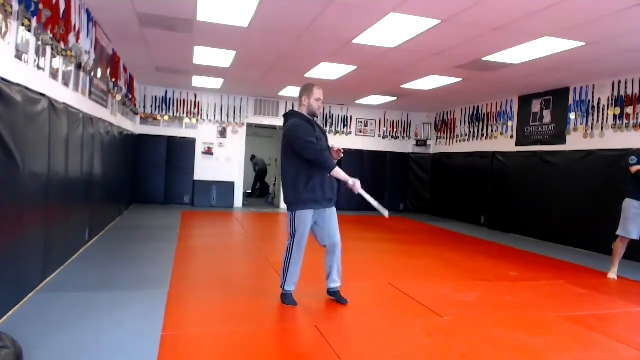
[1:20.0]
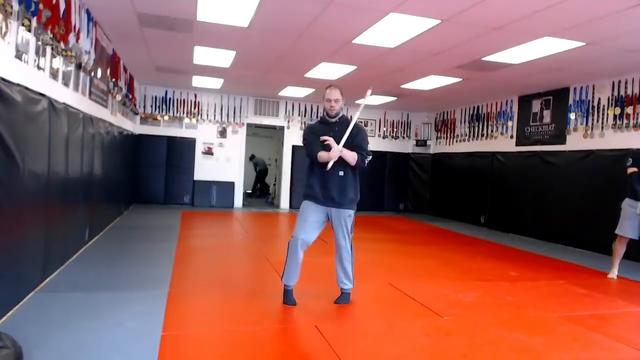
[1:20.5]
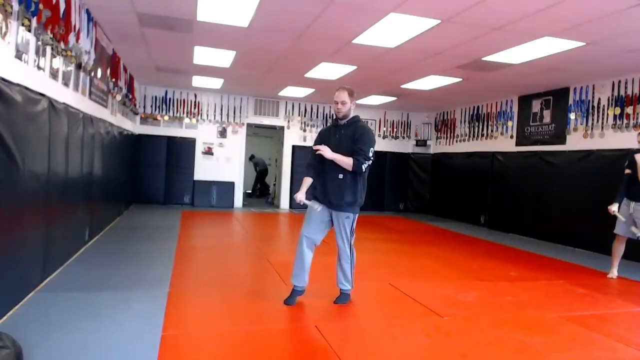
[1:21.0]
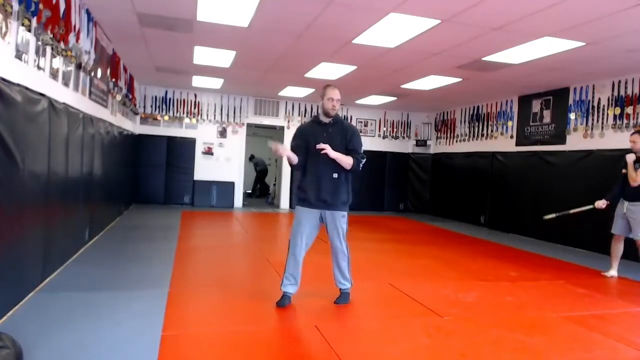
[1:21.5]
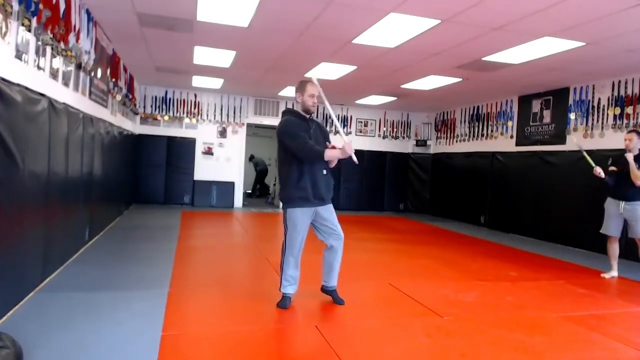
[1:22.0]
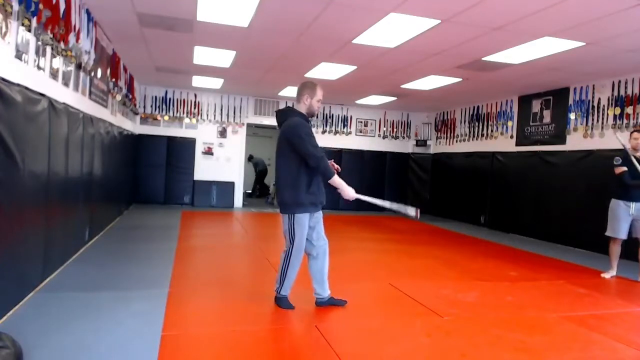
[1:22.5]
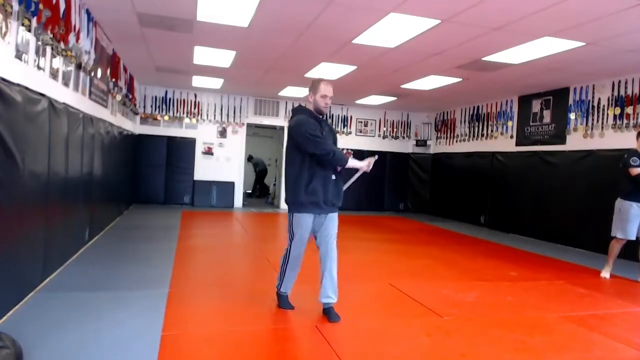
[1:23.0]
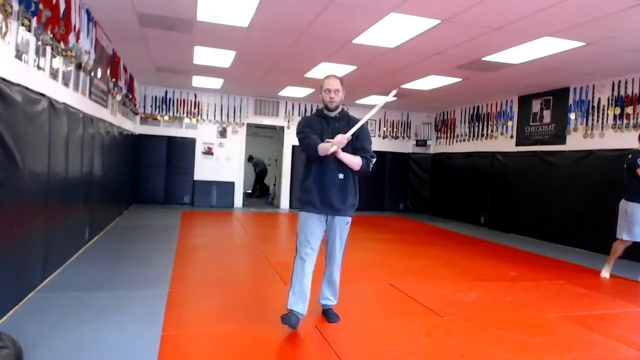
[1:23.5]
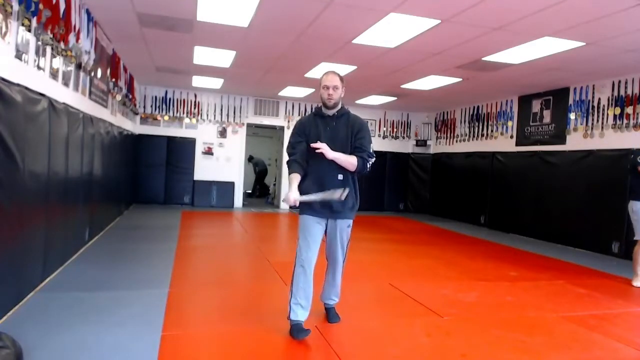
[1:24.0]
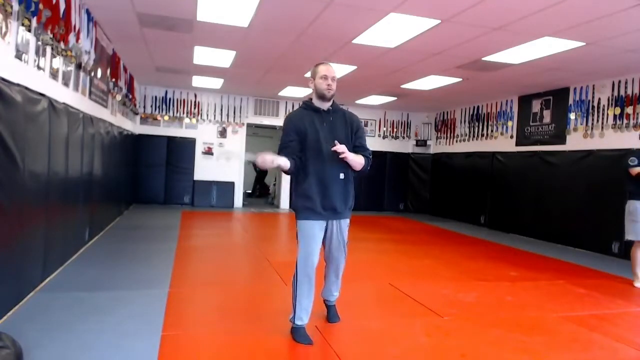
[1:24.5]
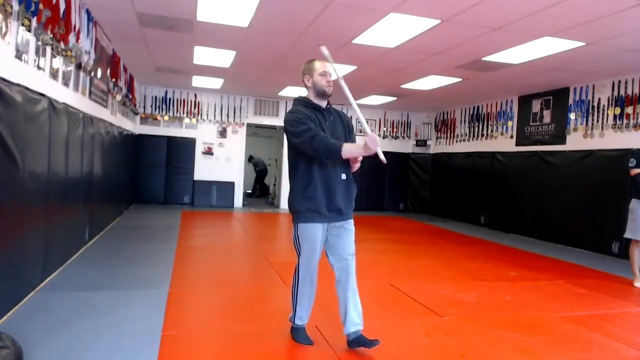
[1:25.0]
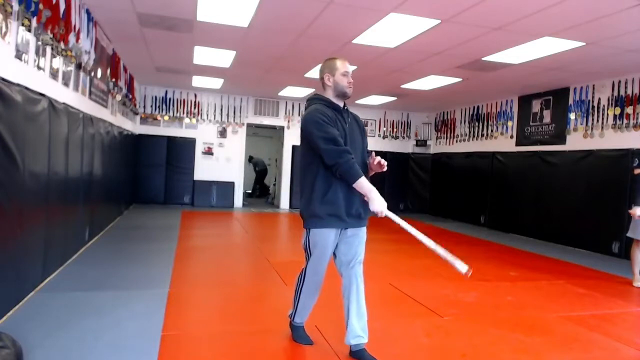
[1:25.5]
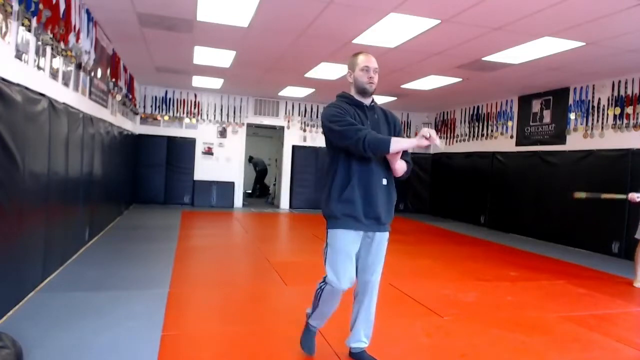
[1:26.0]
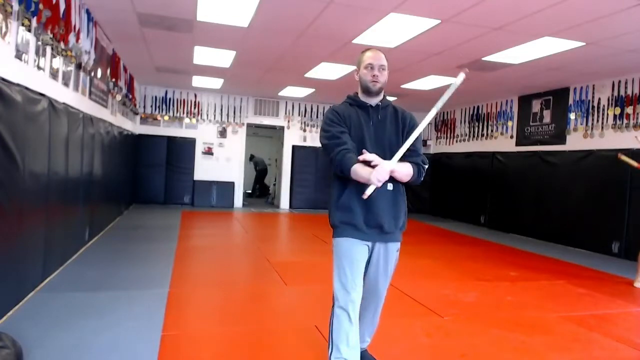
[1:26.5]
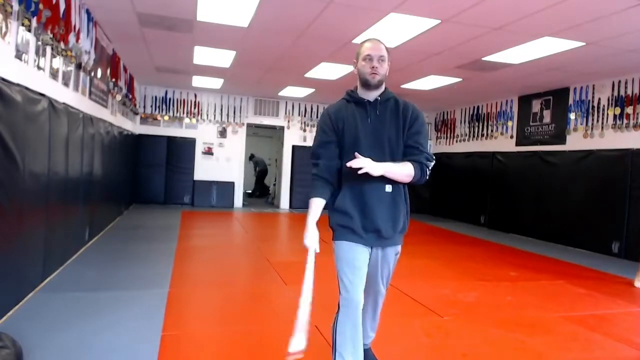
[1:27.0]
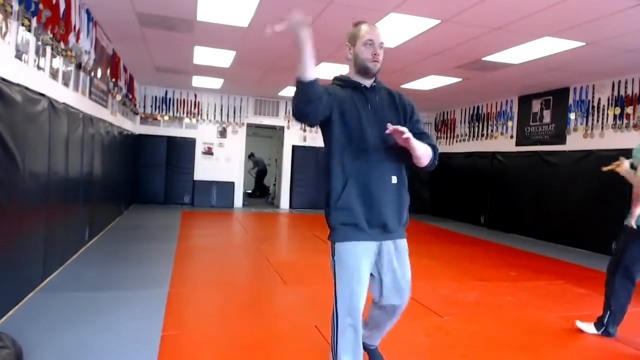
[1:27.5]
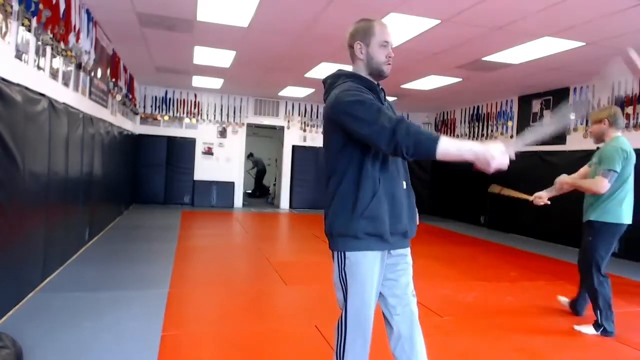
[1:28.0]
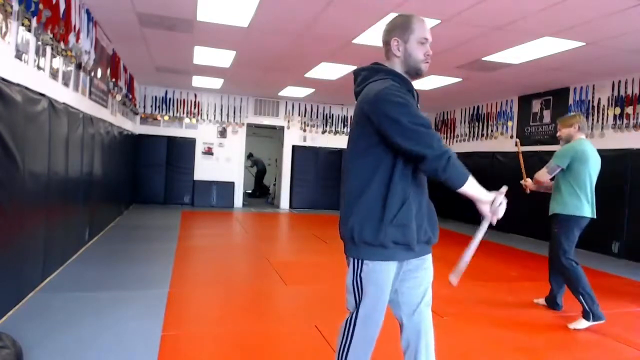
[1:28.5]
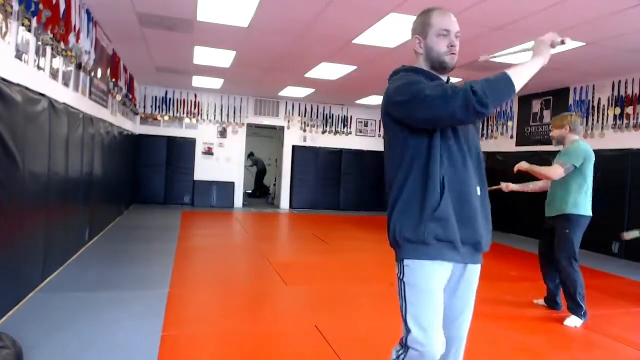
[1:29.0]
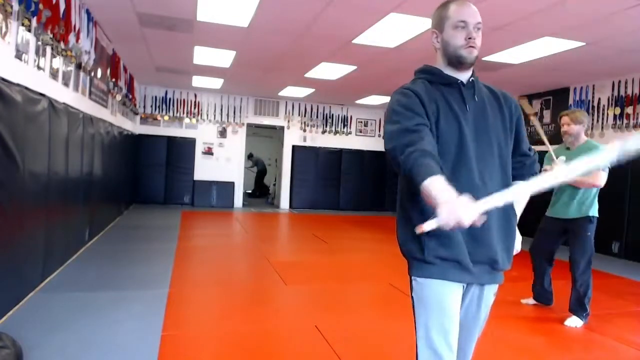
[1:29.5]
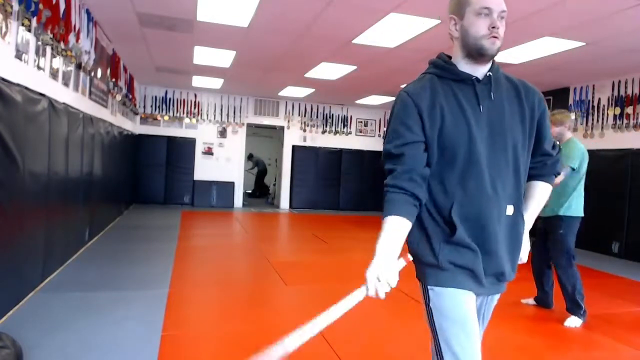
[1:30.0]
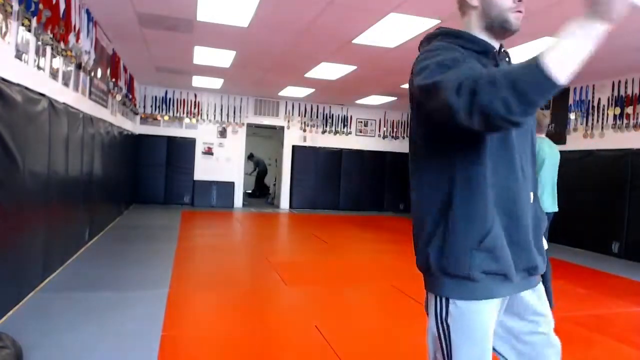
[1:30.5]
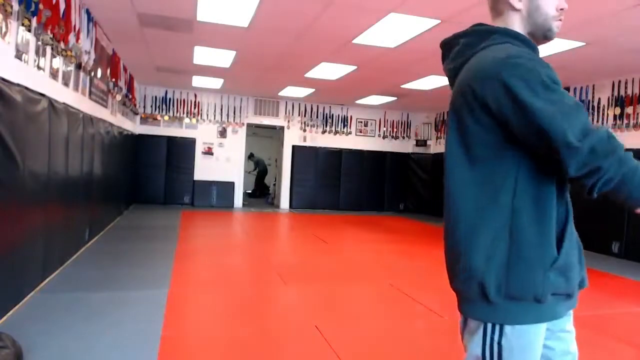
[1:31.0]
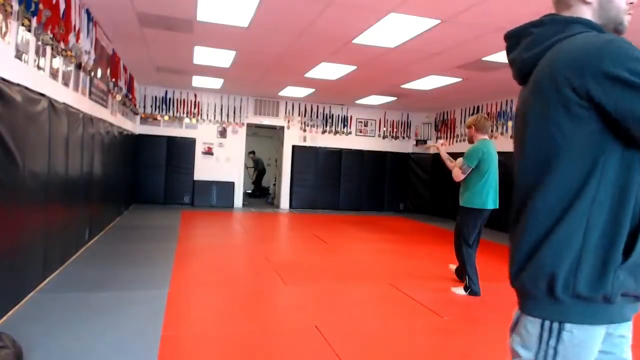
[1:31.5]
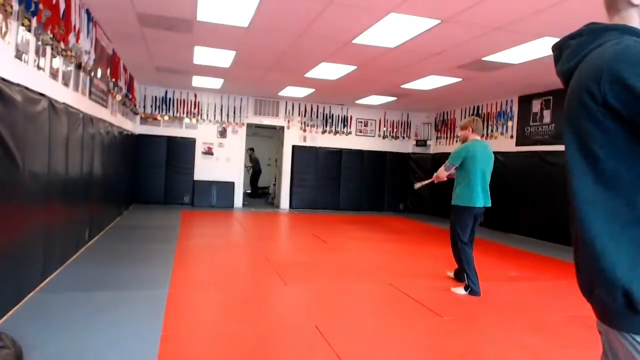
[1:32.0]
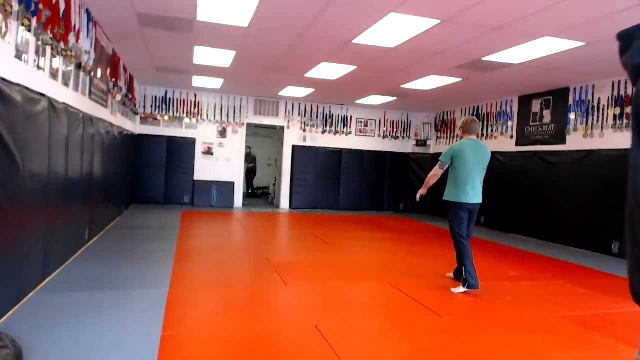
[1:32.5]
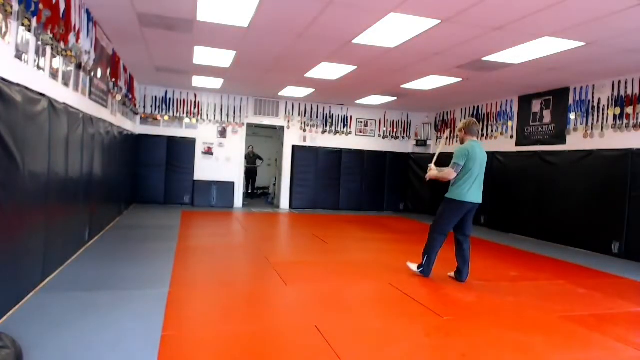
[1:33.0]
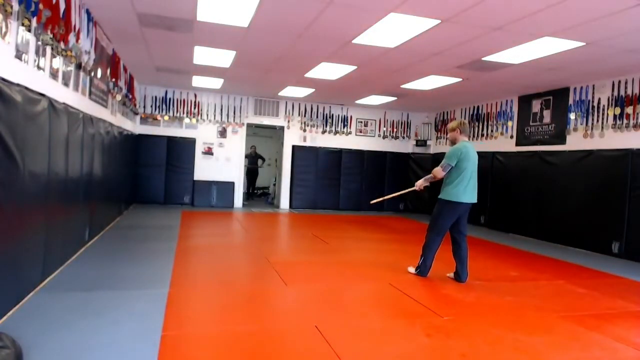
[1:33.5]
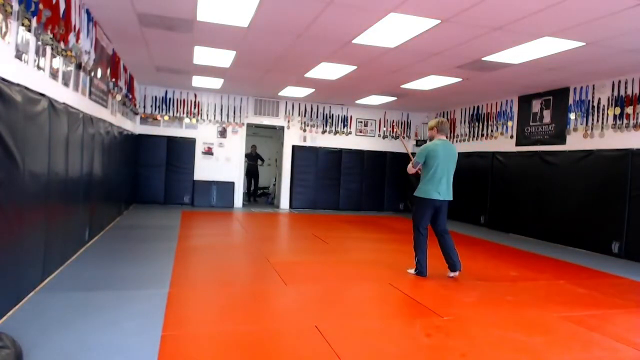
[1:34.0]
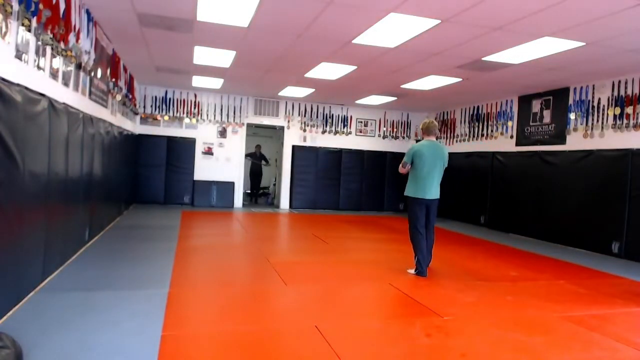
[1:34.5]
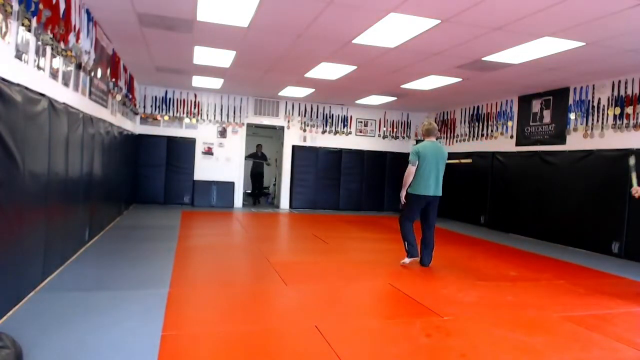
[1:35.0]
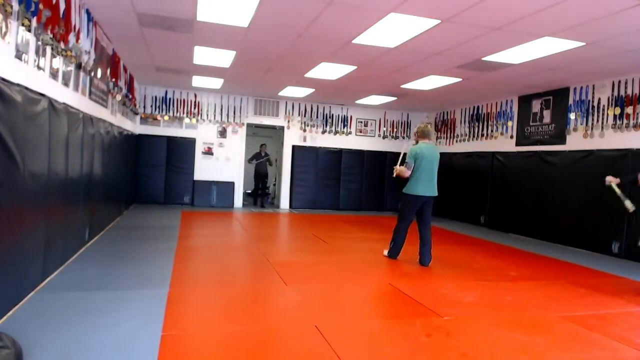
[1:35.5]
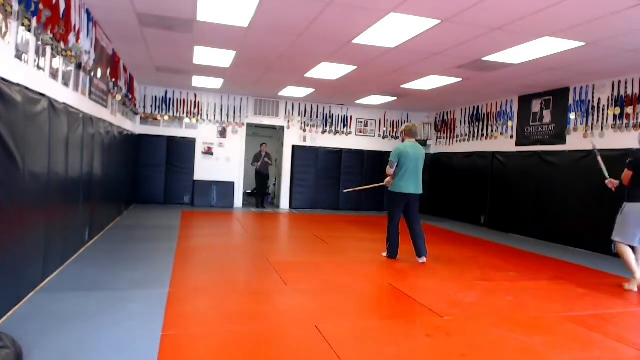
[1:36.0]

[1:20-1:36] The gym or arena scene continues, with the red rectangle on the floor perhaps marking off a valid section of the arena, a gray line around it separating it from the wall, and black padding on the wall; part of the wall is white. There is fluorescent lighting in the ceiling. The man in the center of the frame swings a practice fighting stick held in his right hand, his left hand held a little high with the pinky and thumb out. He walks toward the camera, kind of off toward the right side of the frame, swinging the stick in a round motion: he rotates his wrist and swings it down and to the right, back up, and then down and to the left, repeating this slow looping pattern, with each loop taking several seconds. He mostly looks forward, moving his head a little from side to side. Another man, facing away from the camera, steps into the frame making similar motions. He wears a lighter blue shirt, different from the other men's shirts, and has blonde hair and a longer beard. His movements are not as regular as the others', suggesting perhaps less training; he also holds the stick in his right hand, his left arm moves a lot more, and he walks toward the doorway at the far end of the room. Another man, with dark hair and bare forearms, stands in the doorway further back; it is hard to tell whether he has a stick, and he never steps into the room. The man in the shorts stays on the right side of the frame, also swinging his stick in his right hand and doing wrist rotations, but not walking around the room like the other two.